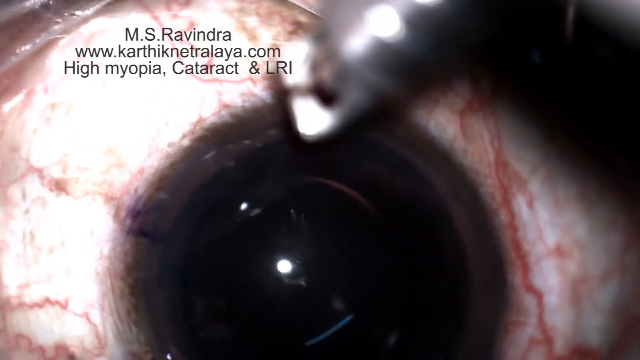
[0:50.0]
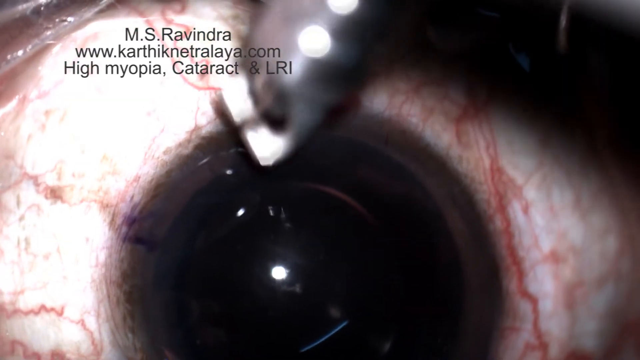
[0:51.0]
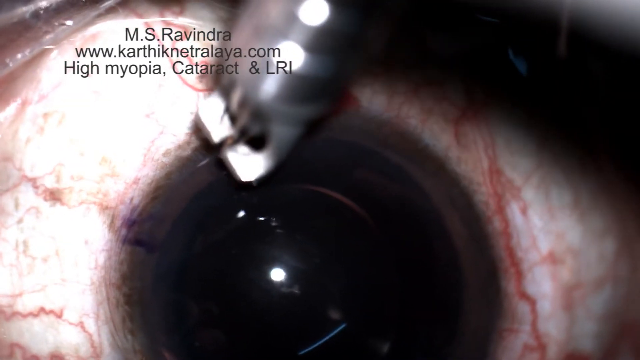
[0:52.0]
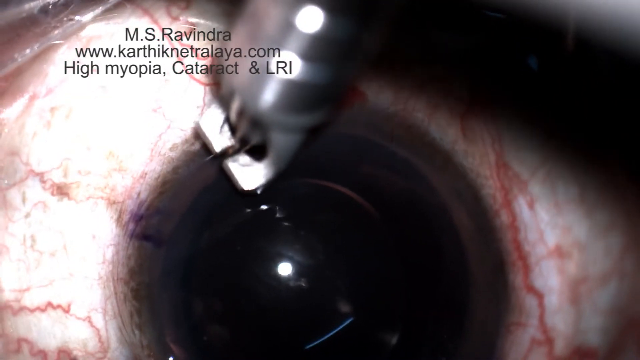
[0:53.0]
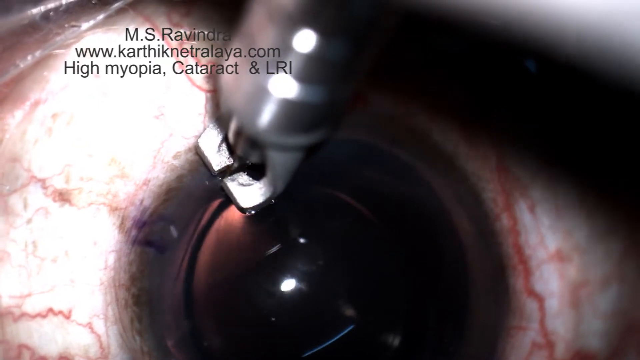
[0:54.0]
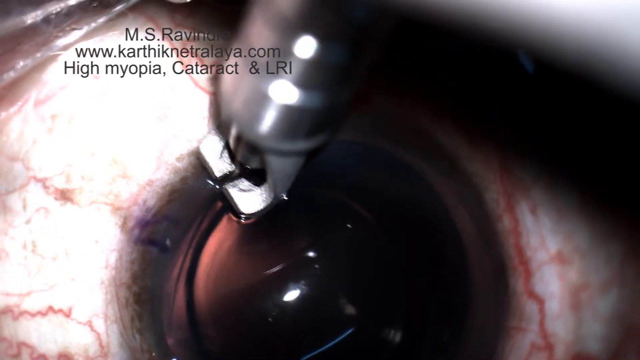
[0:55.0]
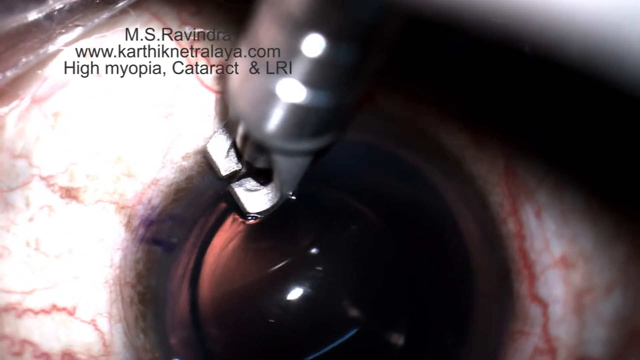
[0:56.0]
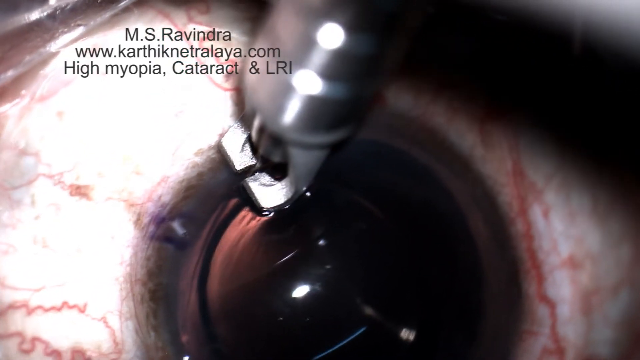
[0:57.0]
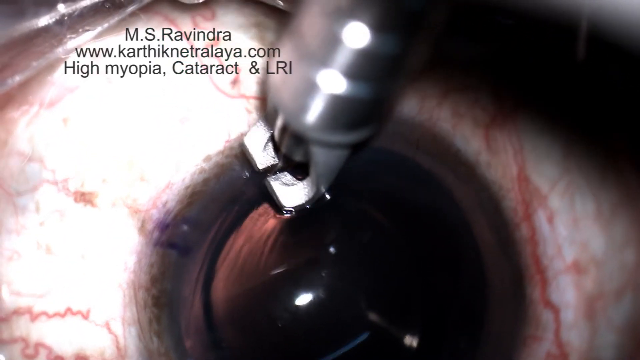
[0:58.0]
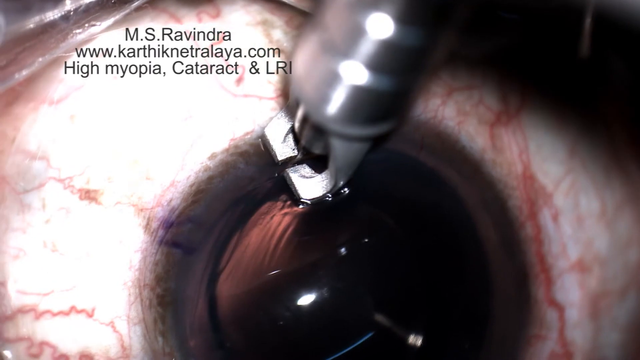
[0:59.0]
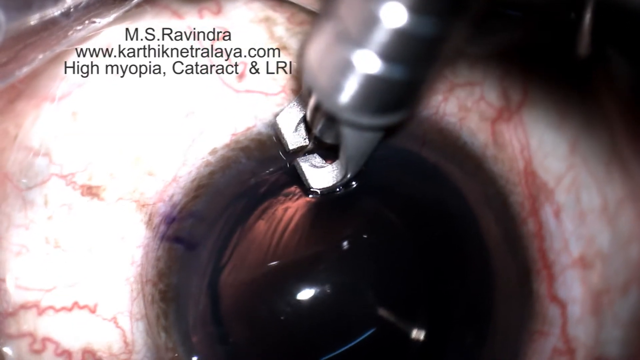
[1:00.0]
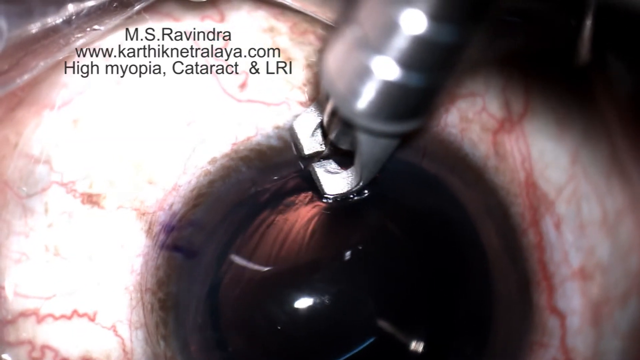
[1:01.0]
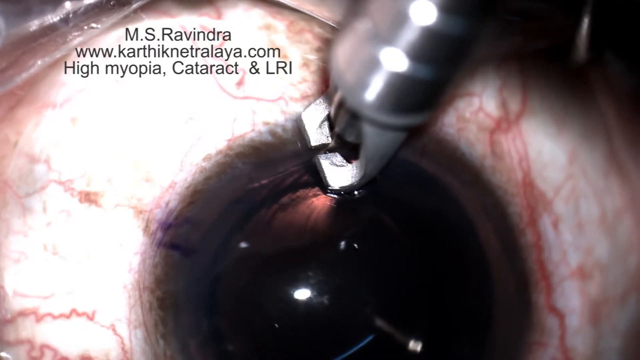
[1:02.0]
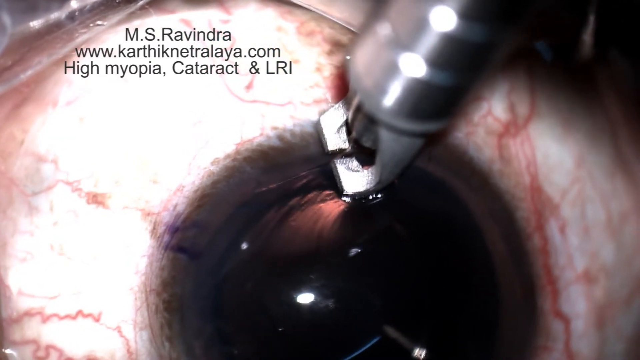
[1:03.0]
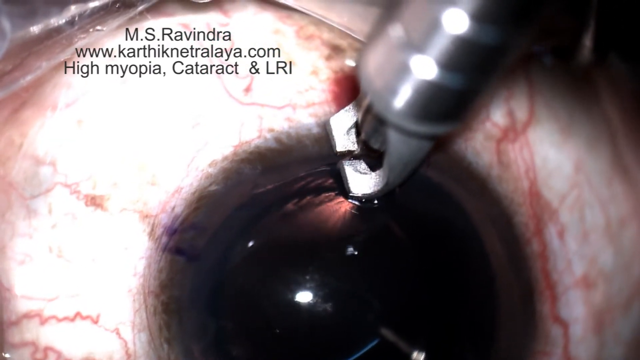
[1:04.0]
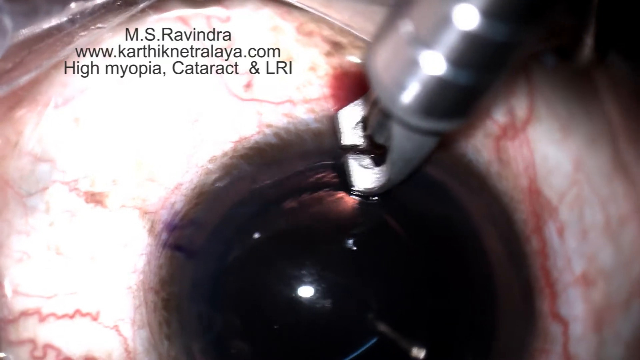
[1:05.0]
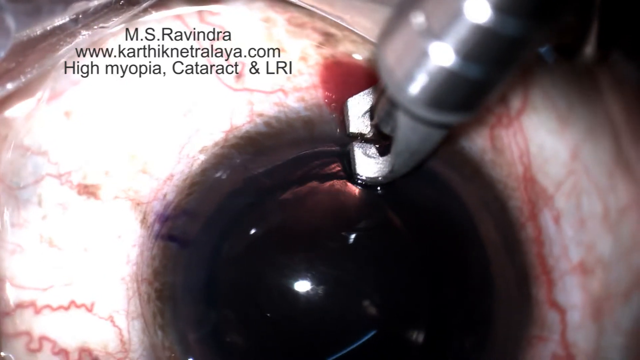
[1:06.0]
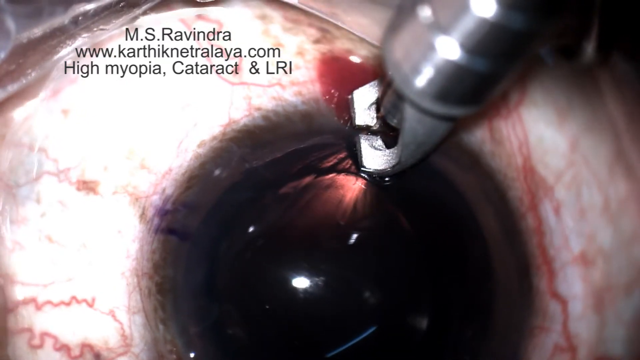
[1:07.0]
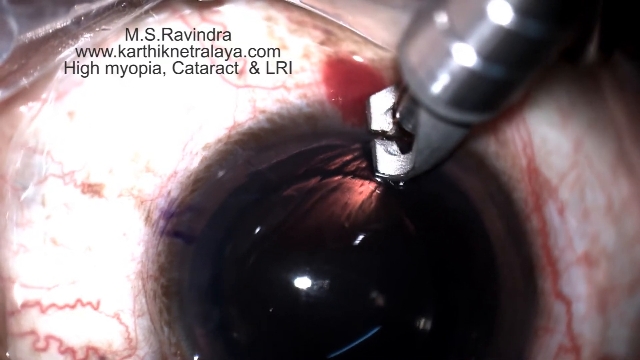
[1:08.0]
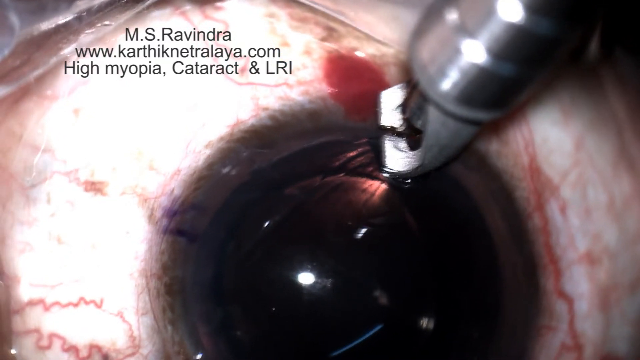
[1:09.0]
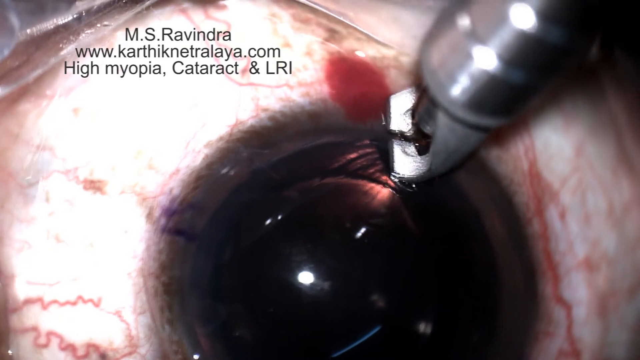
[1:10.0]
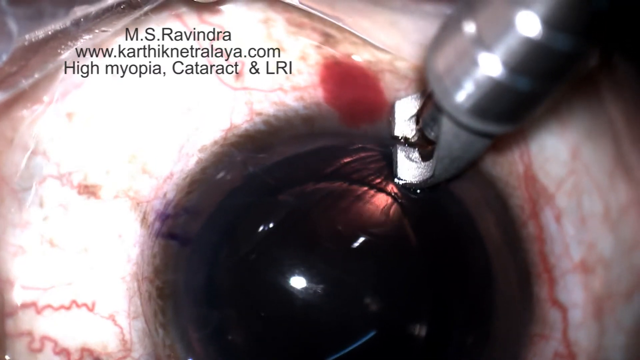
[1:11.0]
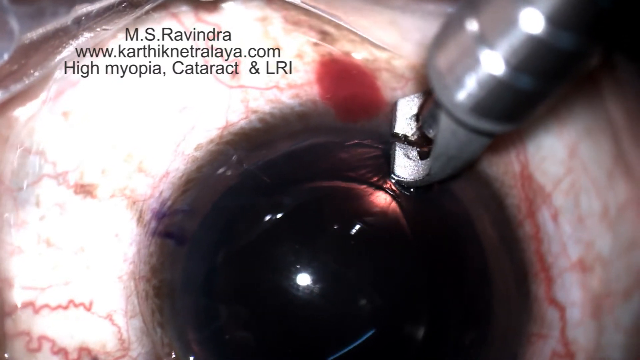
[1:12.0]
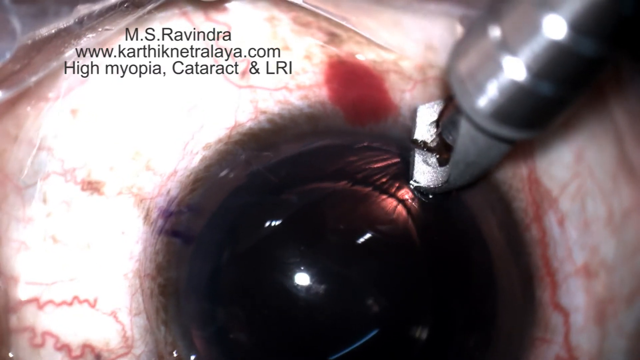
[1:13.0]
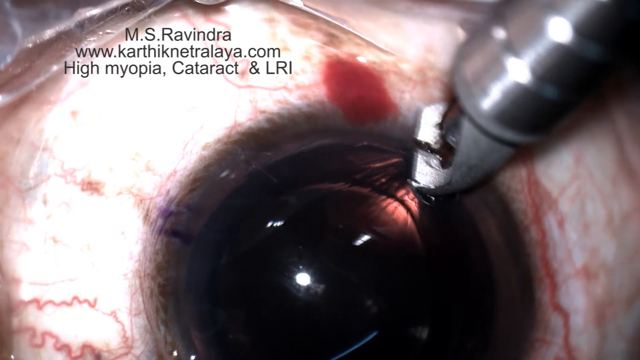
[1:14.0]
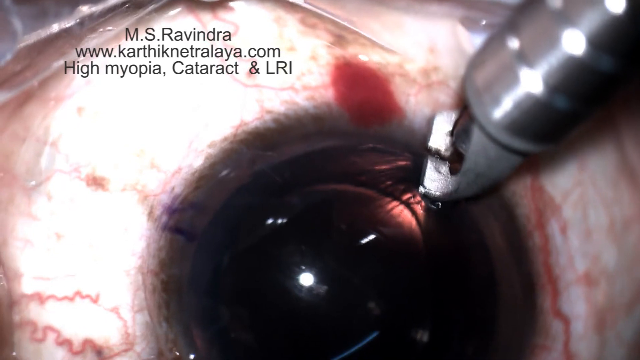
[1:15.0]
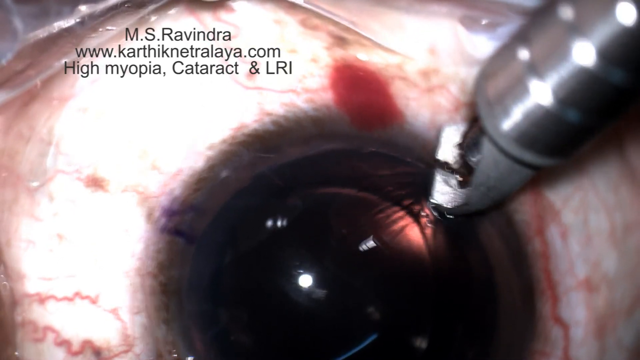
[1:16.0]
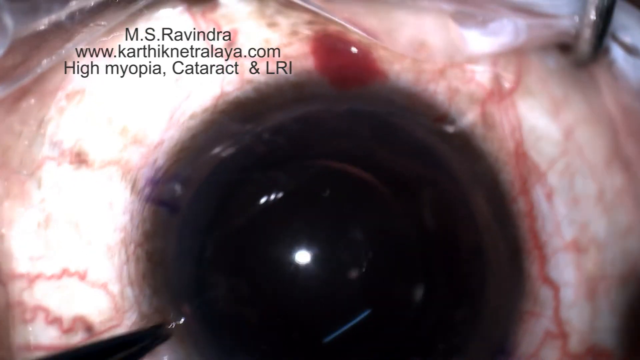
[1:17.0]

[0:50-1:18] A metal device that looks like a clamp, with two metal sides, is clamped onto what seems to be a piece of tissue and very slowly pulls it to the right-hand side, so it looks like a layer of tissue is being removed from the eyeball. Little else is visible apart from the surrounding kind of white and red flesh around the eyeball. The metal device moves very slowly, perhaps out of care. Finally, the device moves clockwise, sort of alongside the eyeball, and doesn't appear to take anything; it looks like it should be pulling something off, but it disappears off the screen with nothing attached.